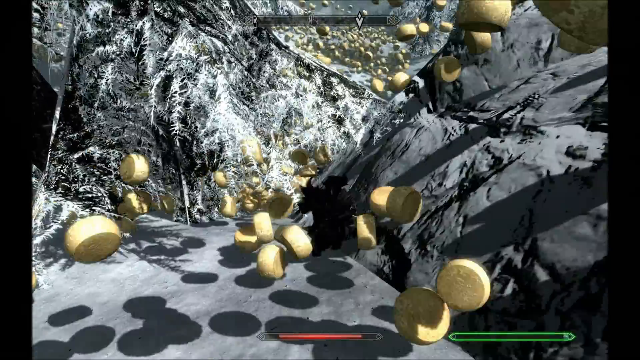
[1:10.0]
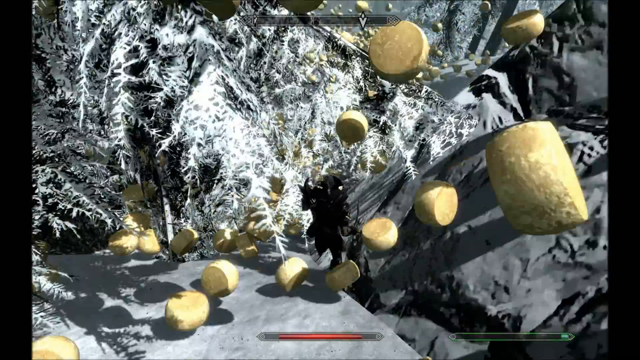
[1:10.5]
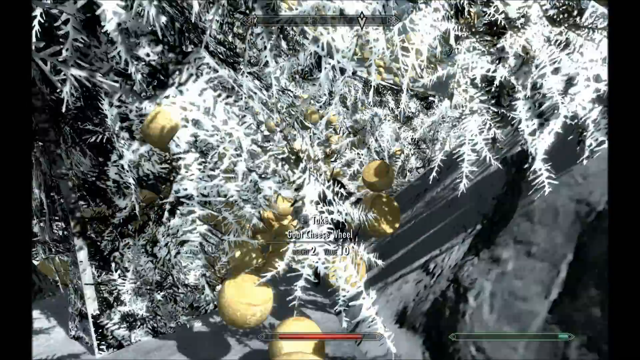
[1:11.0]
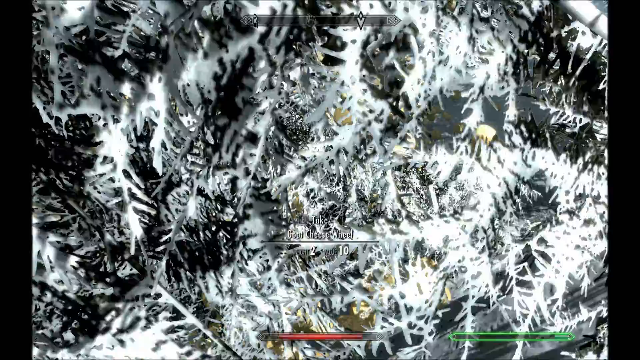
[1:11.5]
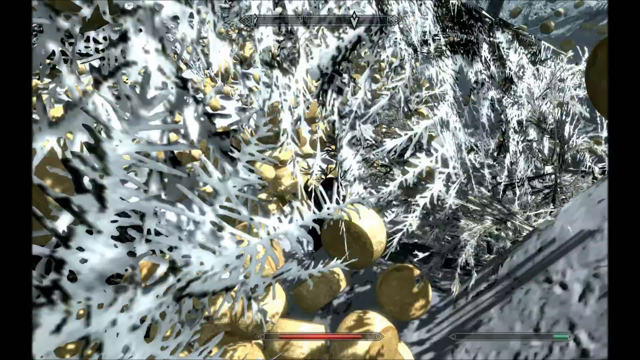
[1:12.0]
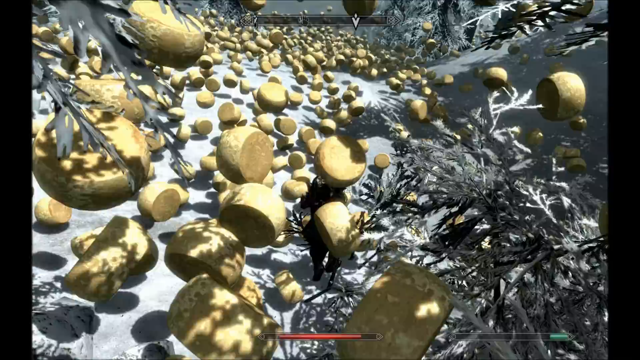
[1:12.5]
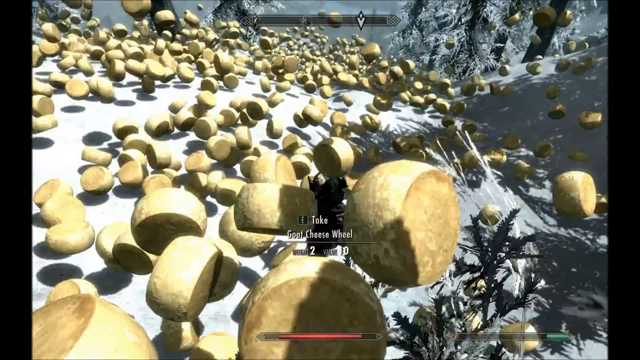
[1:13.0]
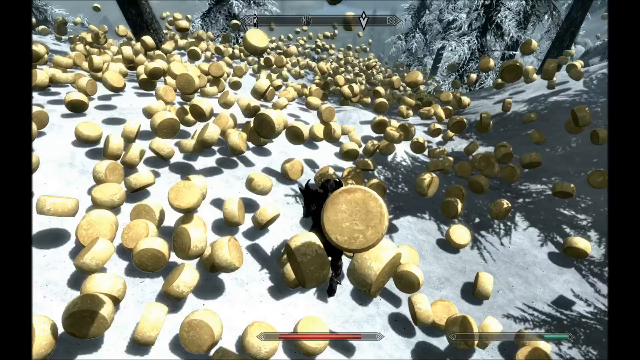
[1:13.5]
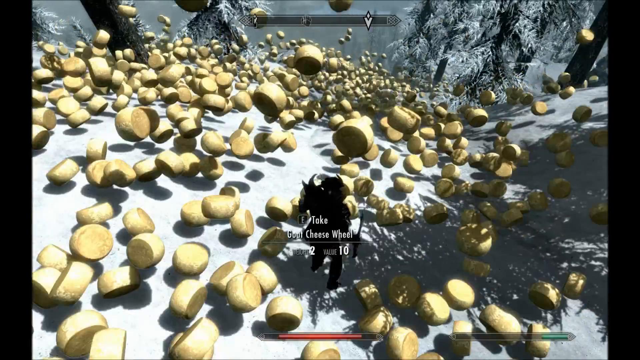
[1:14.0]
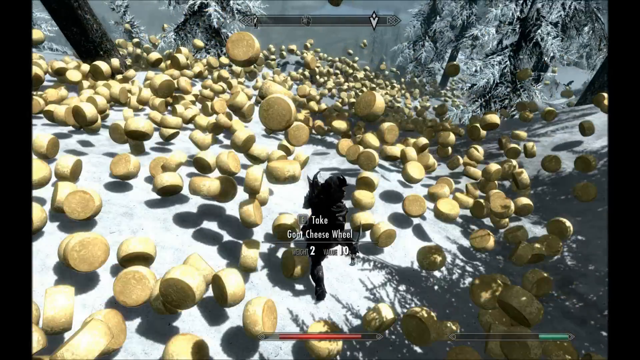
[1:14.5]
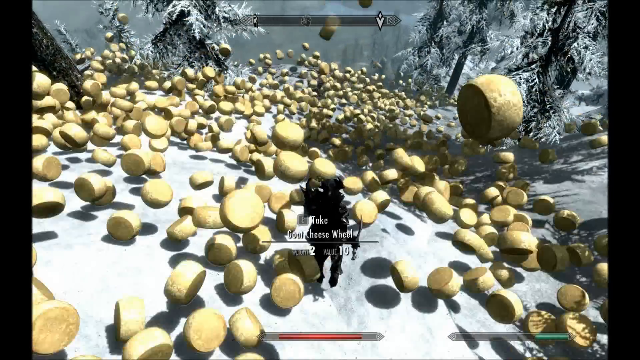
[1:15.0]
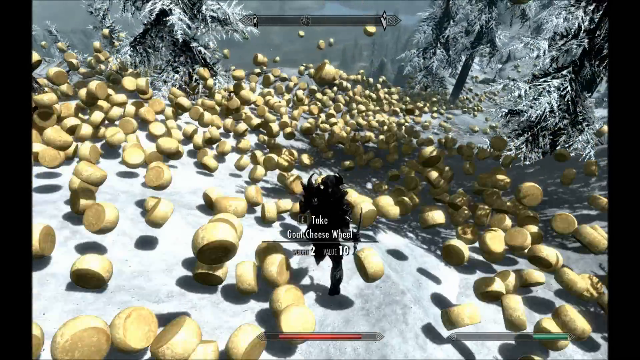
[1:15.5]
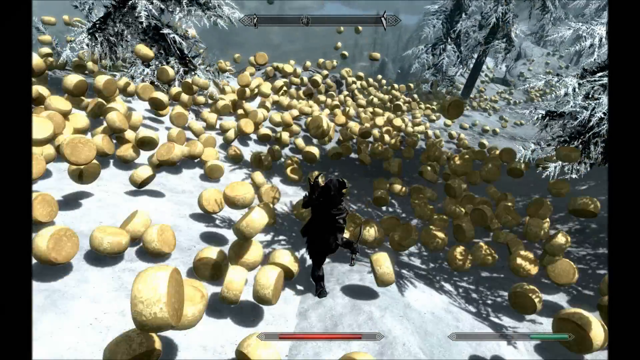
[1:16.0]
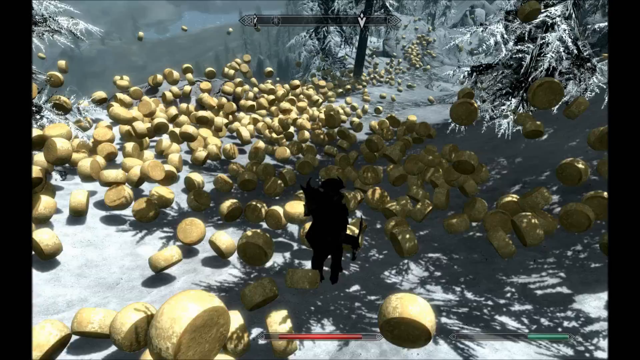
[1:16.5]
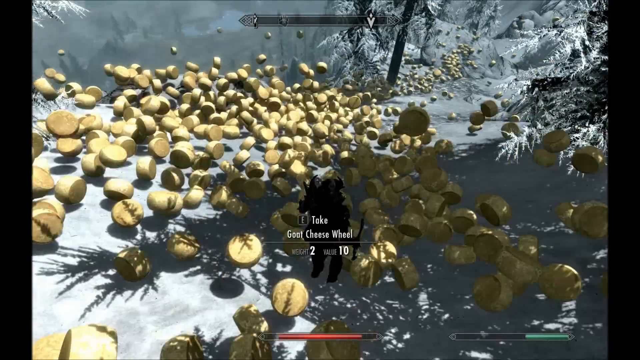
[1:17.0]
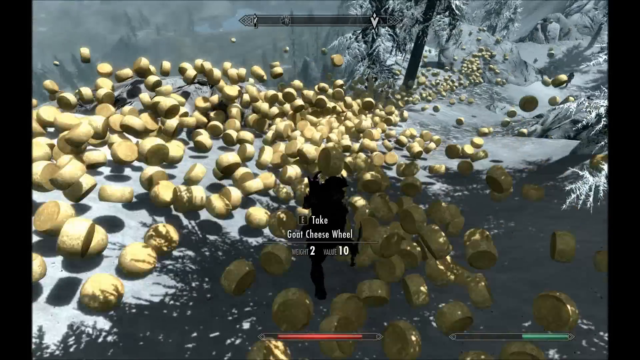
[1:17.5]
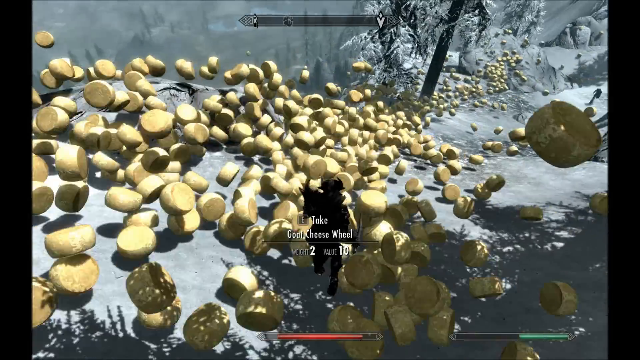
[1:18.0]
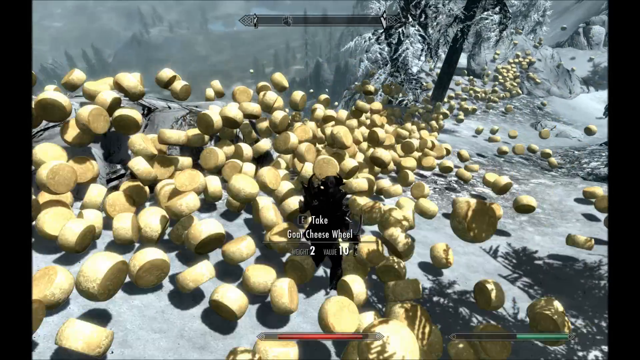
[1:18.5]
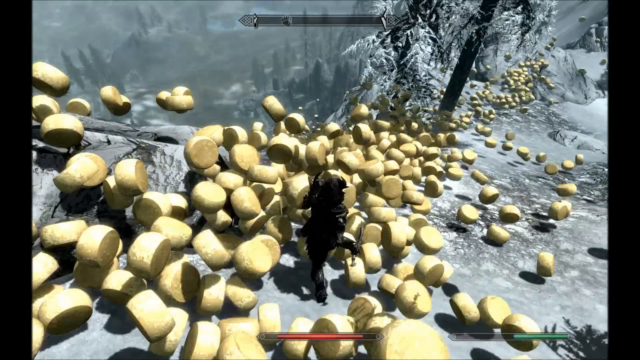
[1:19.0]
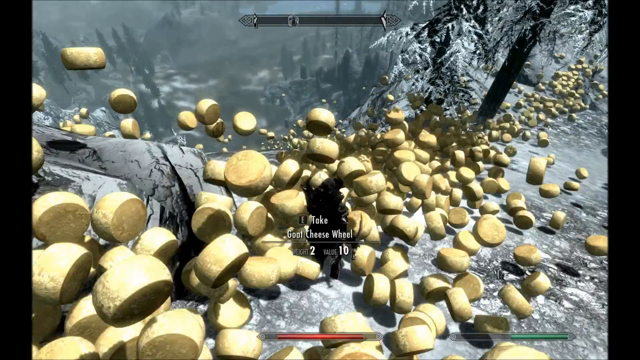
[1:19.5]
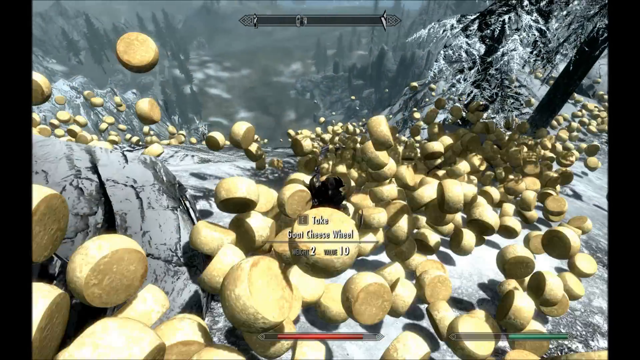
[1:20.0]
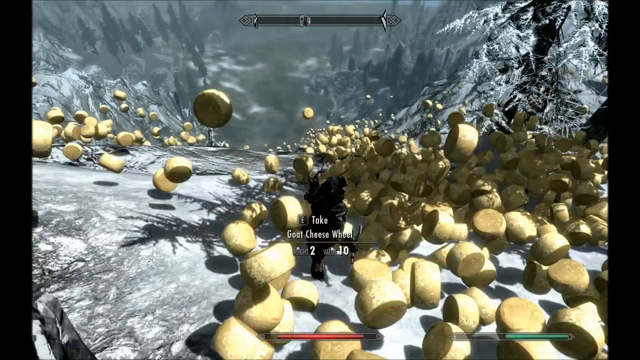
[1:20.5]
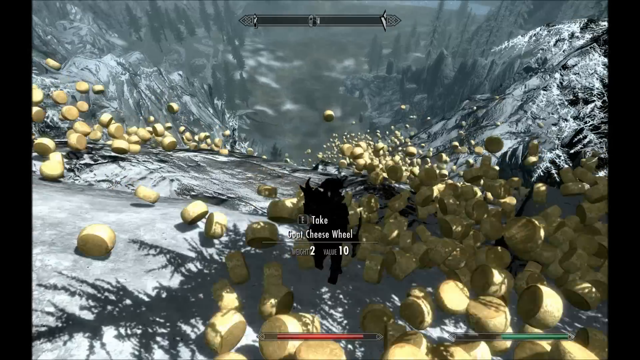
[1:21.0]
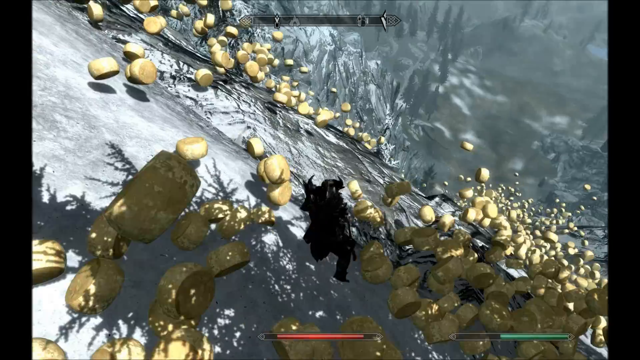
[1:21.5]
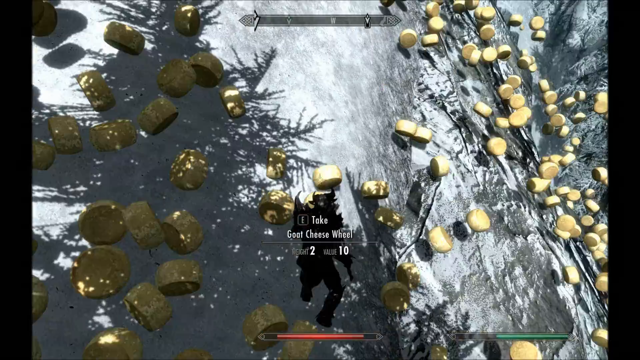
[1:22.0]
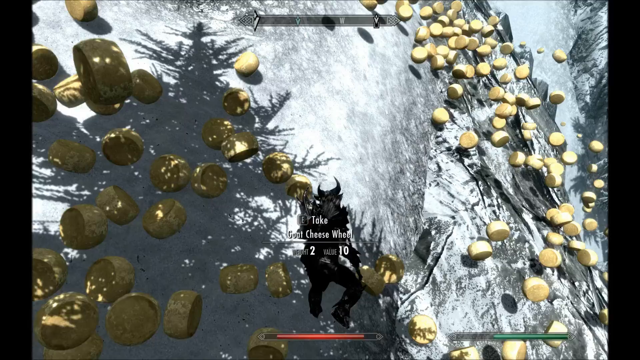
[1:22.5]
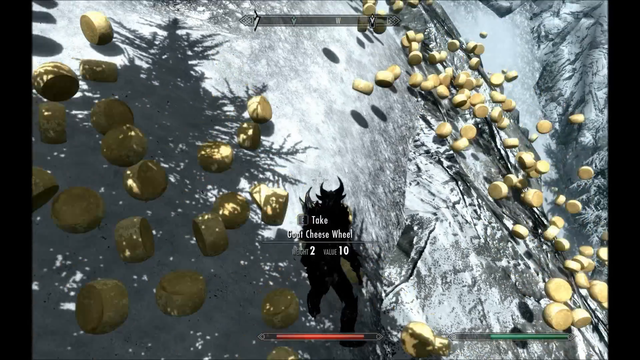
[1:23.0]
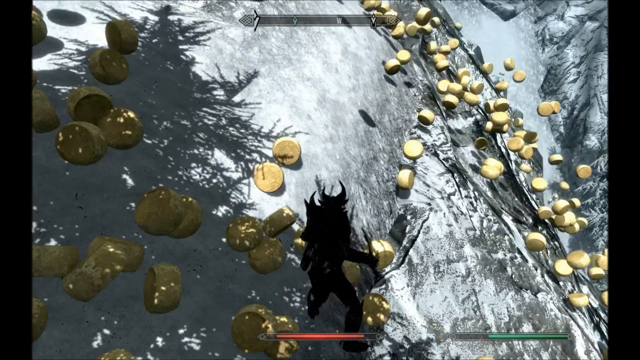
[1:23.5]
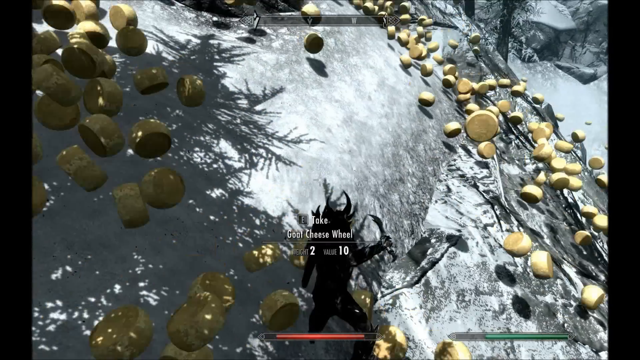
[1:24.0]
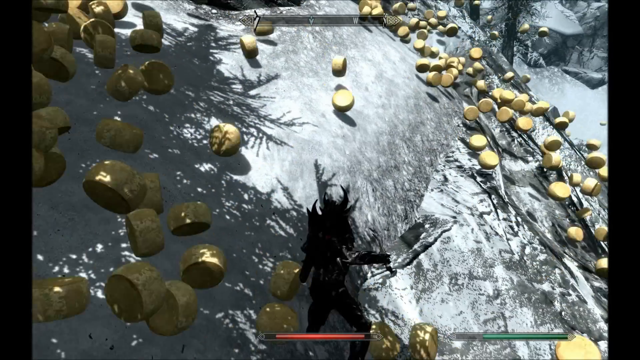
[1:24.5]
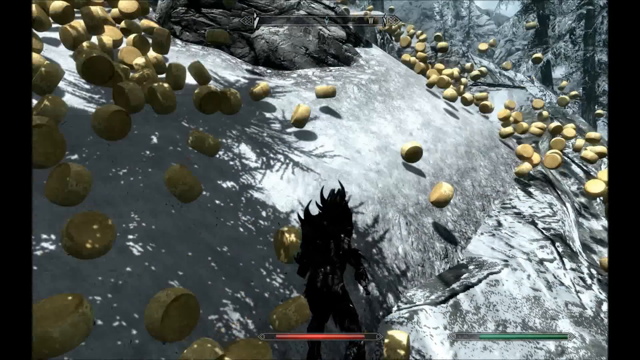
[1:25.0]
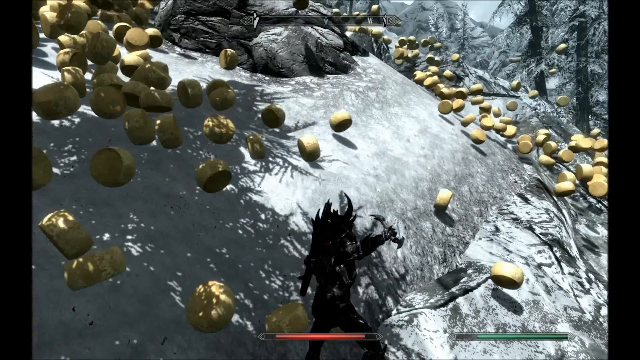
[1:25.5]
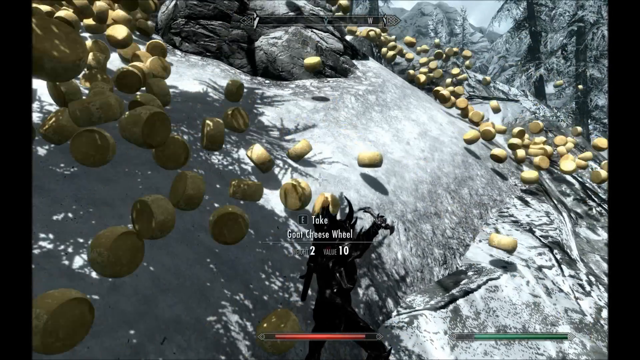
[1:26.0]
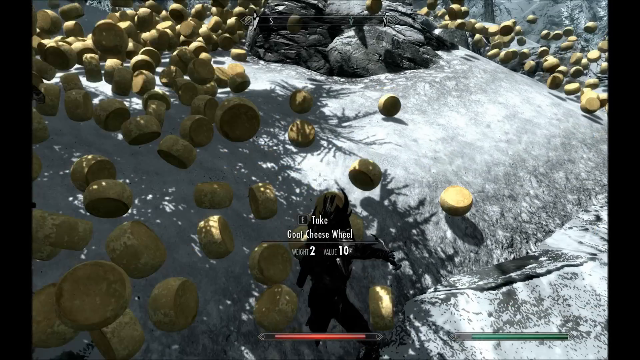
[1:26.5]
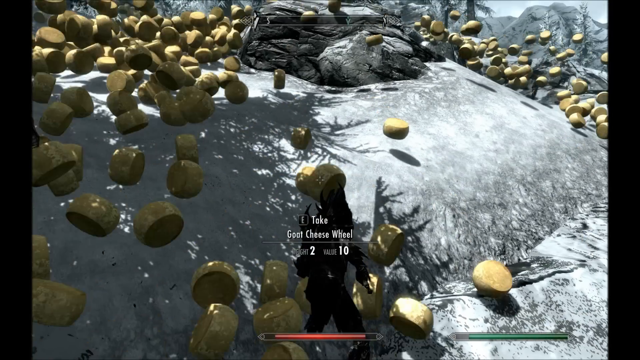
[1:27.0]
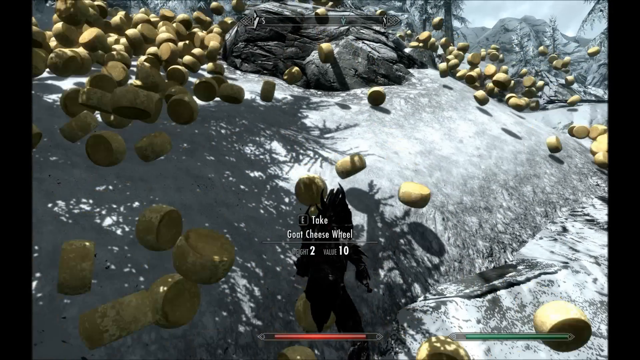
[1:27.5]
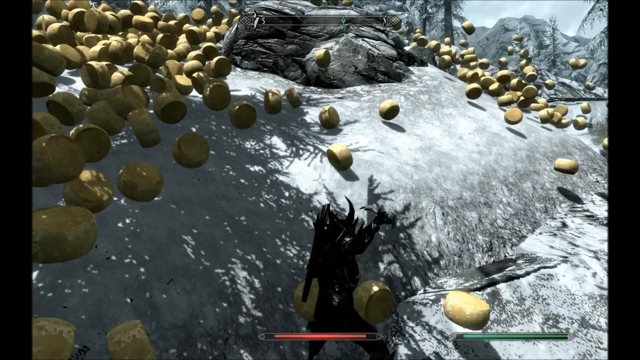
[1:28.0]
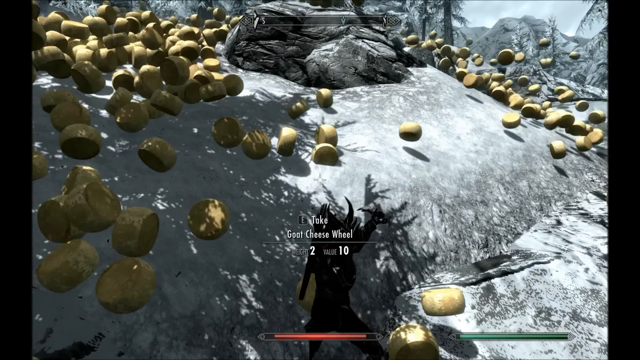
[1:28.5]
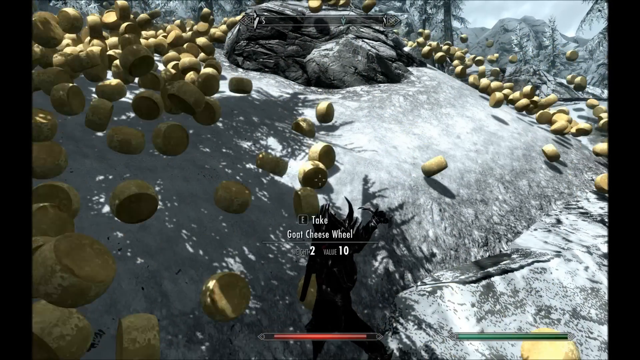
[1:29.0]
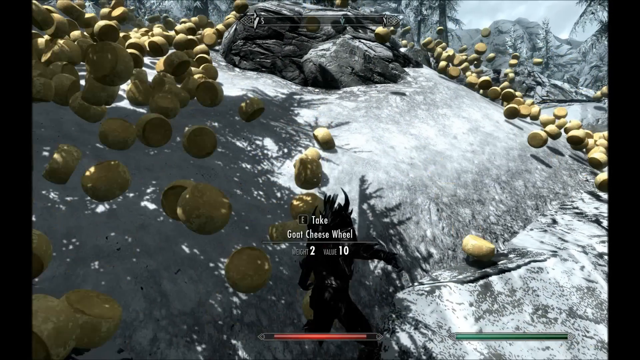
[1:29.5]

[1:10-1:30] The video game appears to be a first-person game in a third-person view. The character, at the lower center of the screen, looks to be sliding down a mountain with objects scattered around them. The objects look like cheese wheels, and small white text at the bottom center reads "take a cheese wheel". A tree comes into view as the little cheese wheel objects slide down the snow-covered mountain with the character; there are thousands of them. The mountain looks very steep, and shadows of trees that are out of view fall on the snow. The character kind of turns around, kind of stopping to take some of the cheese wheels.